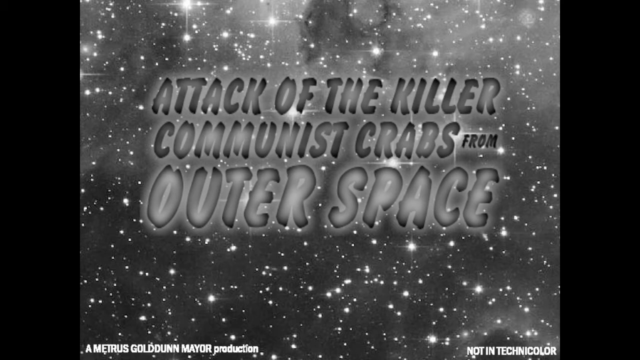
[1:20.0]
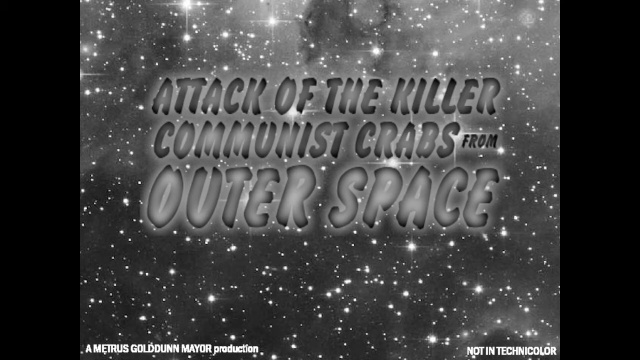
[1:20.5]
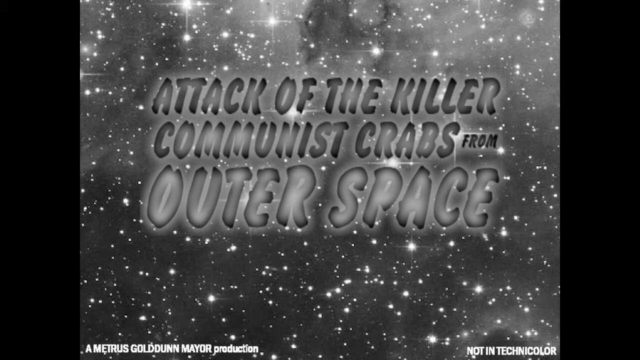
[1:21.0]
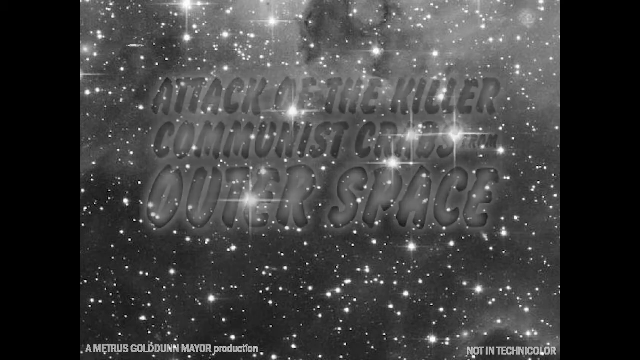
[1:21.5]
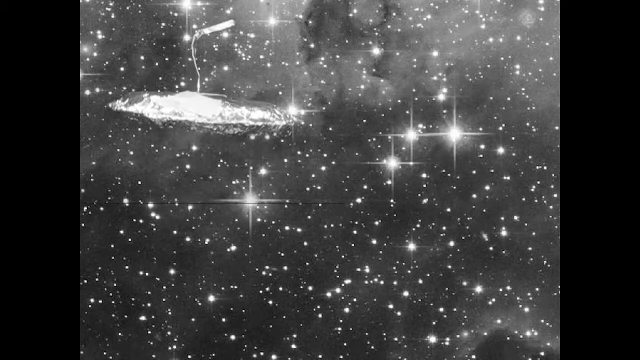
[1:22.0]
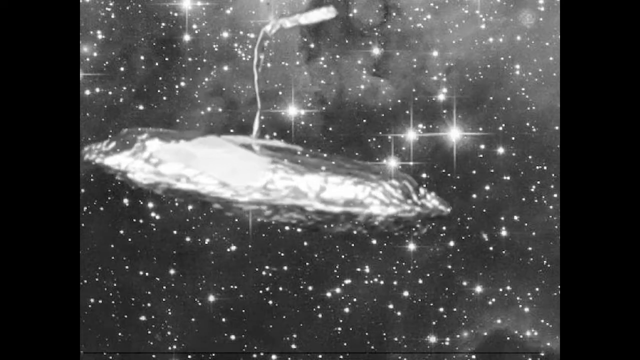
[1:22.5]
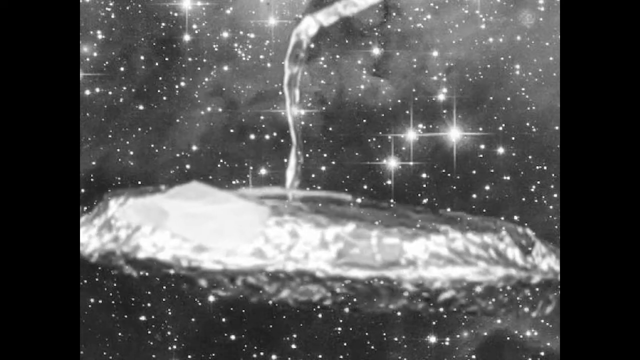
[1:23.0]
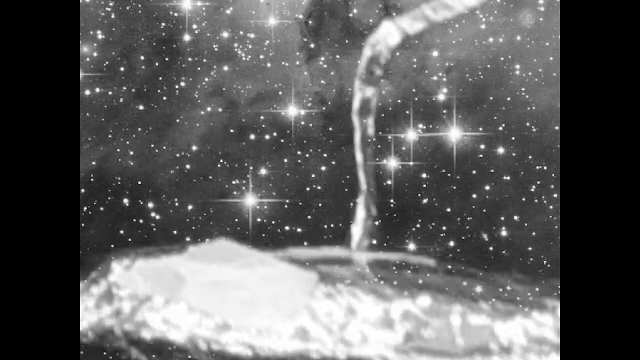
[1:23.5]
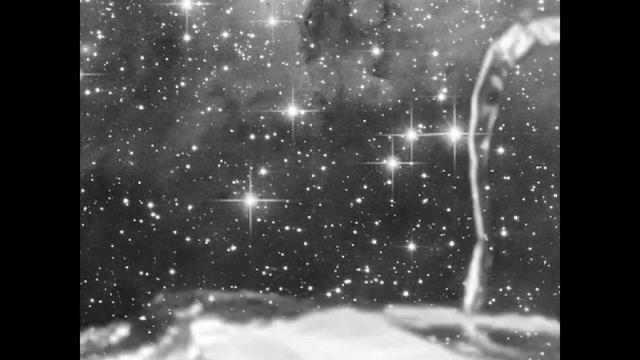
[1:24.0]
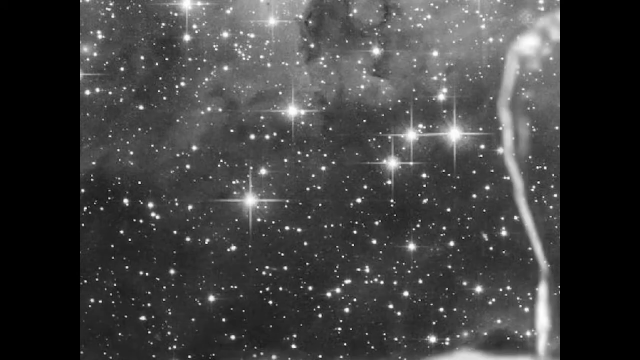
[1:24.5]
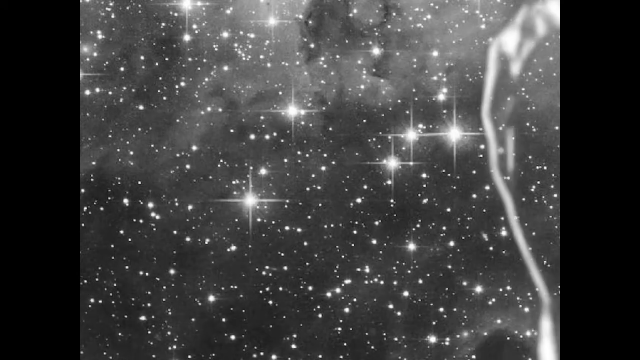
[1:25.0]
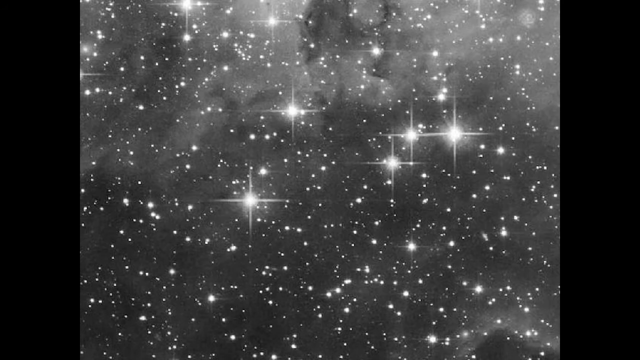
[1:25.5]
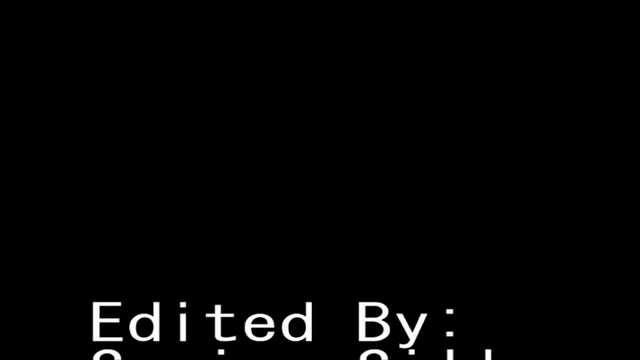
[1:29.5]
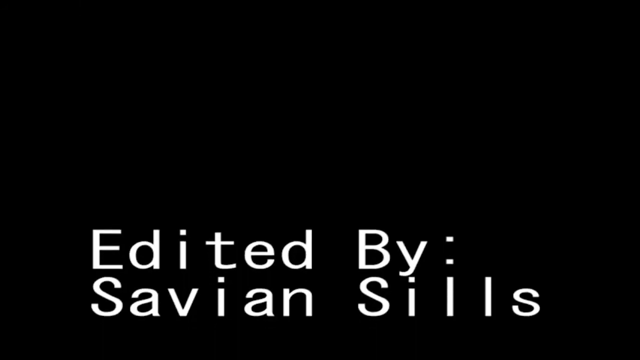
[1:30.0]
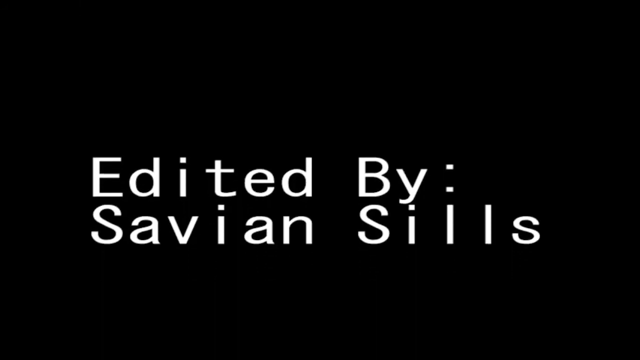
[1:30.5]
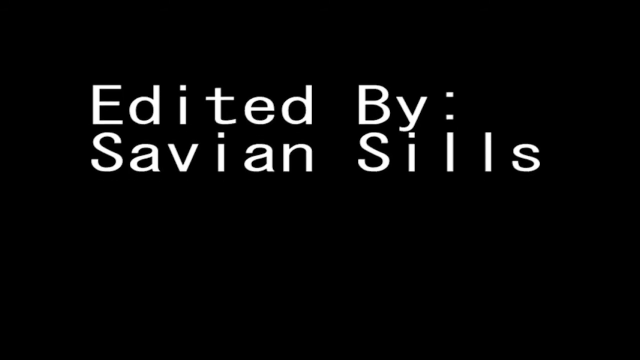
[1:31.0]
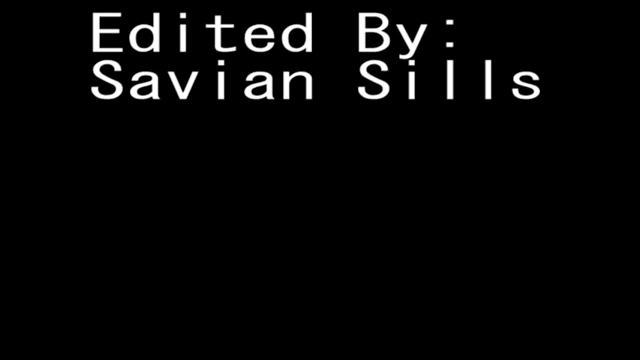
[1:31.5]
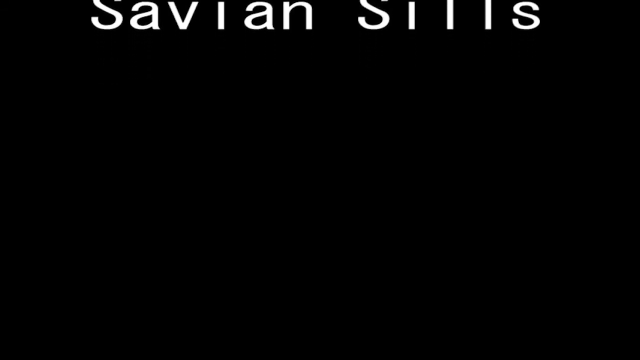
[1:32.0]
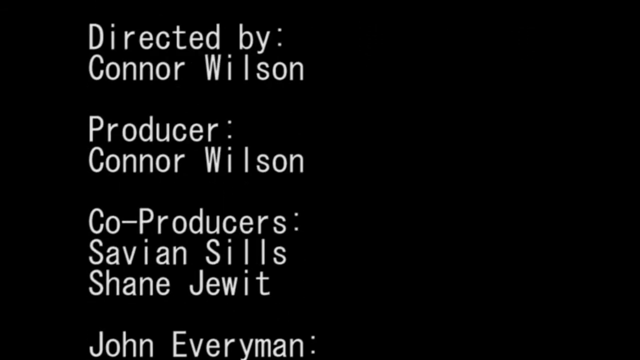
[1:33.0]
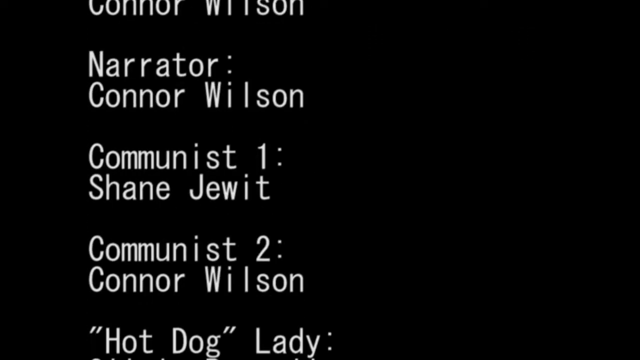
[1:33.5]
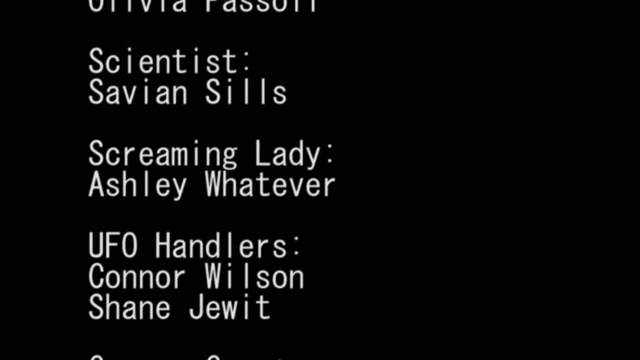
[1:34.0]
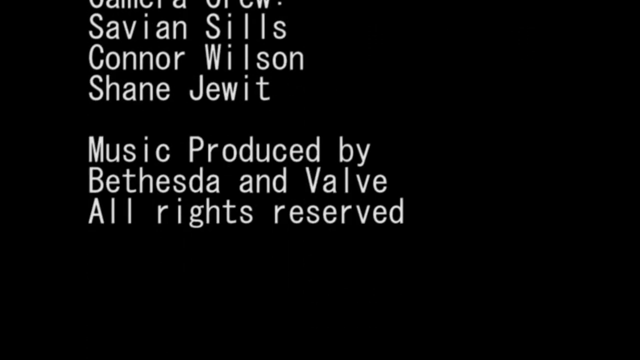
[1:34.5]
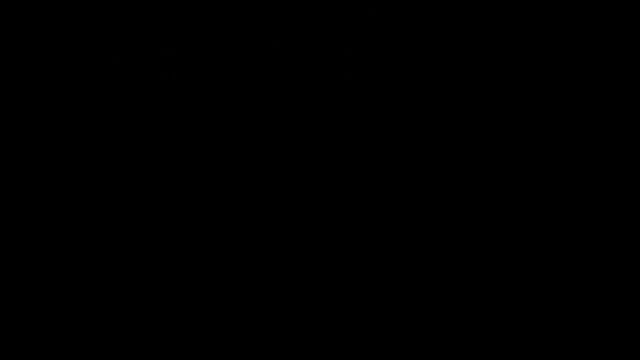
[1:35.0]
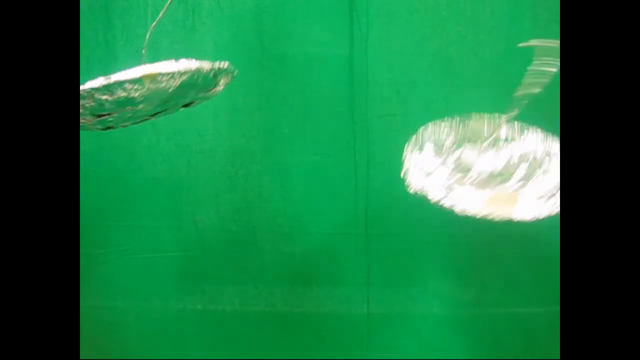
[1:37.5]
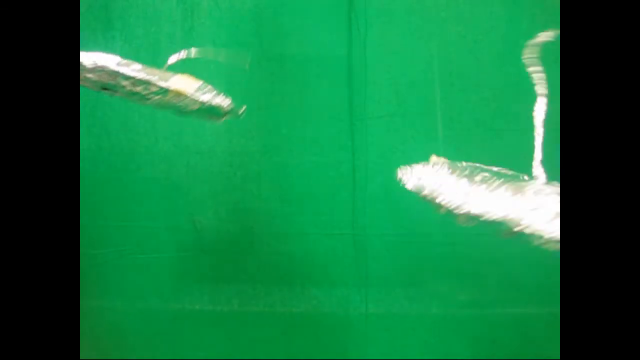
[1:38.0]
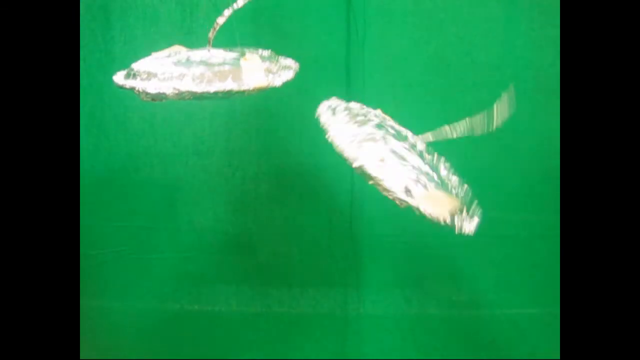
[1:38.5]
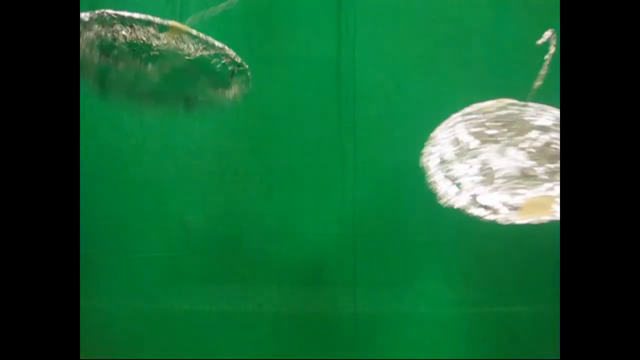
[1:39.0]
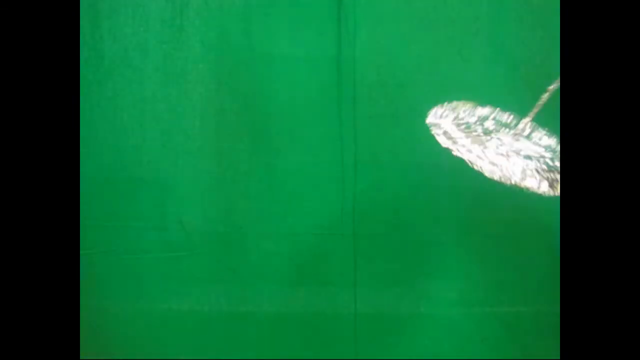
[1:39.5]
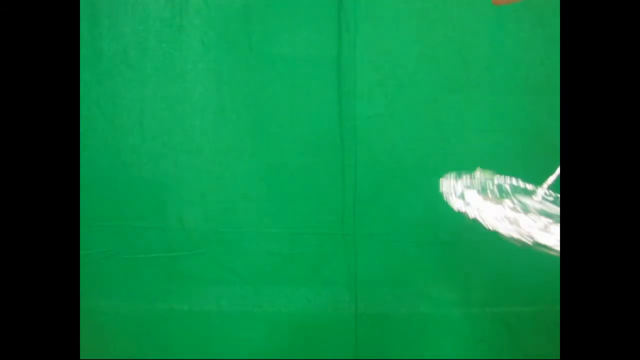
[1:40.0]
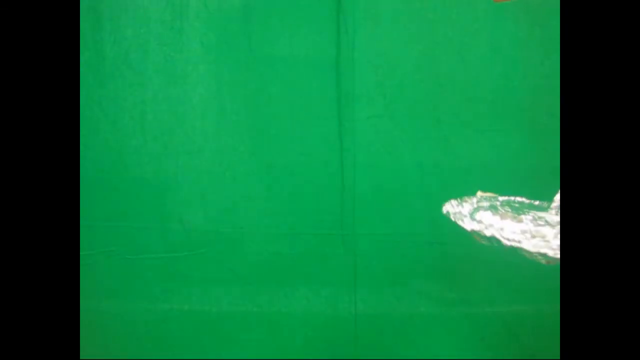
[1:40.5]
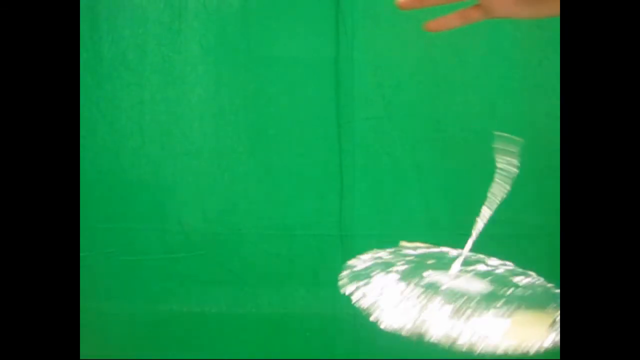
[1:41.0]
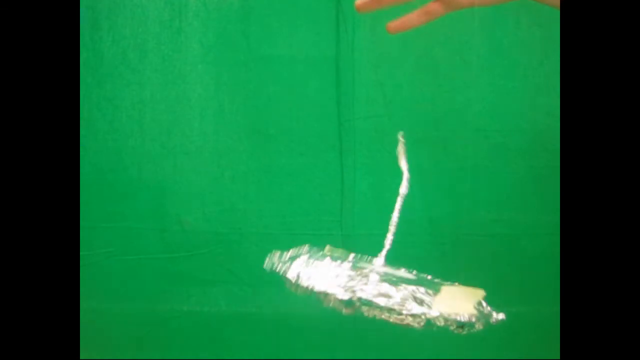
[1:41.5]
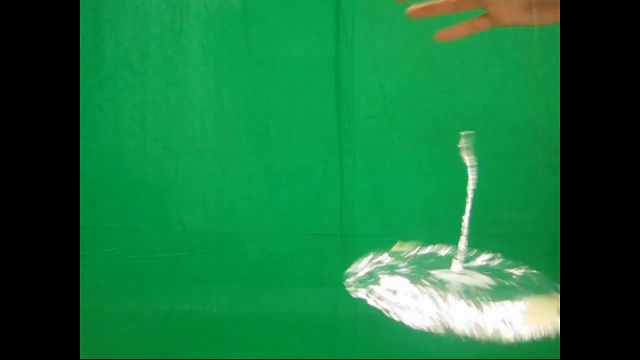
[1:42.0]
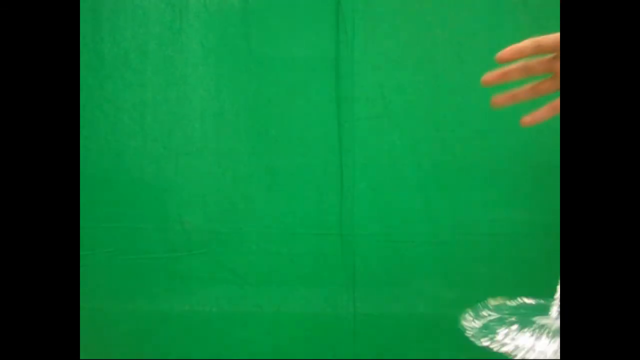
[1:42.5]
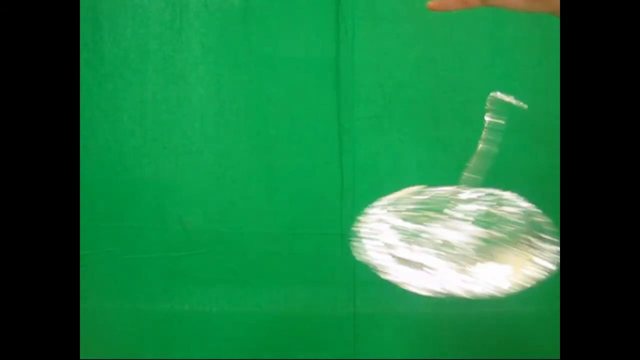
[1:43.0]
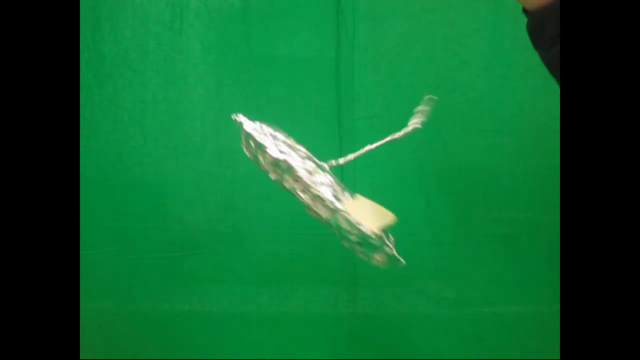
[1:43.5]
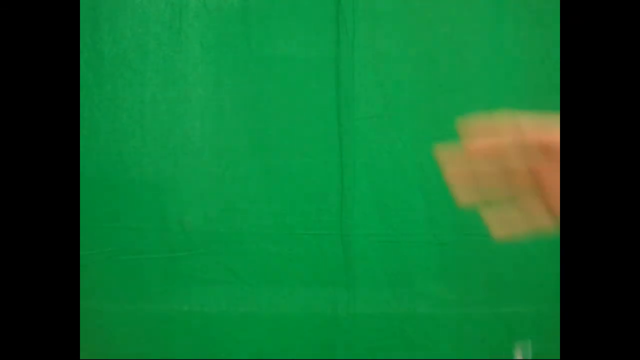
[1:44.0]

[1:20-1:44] The title "Attack of the Killer Communist Crabs from Outer Space" is shown. A foil disc appears that looks like a space UFO, with a foil, almost string-like antenna at the top of the disc. Credits roll in white letters on a black background, starting with "edited by" and the editor's name, then very quickly scrolling through the names of the contributors: "Communist 2, Connor Wilson, Hot Dog Lady, Olivia, Pasoli, Scientist, Savion, Sills." The screen goes black. Then color appears: a bright green background with the two foil discs, antenna-type rods coming off the top of them. One of them drops down. A hand with a string controls the other disc as it moves through the space, and then that last disc drops and disappears. The screen freezes.